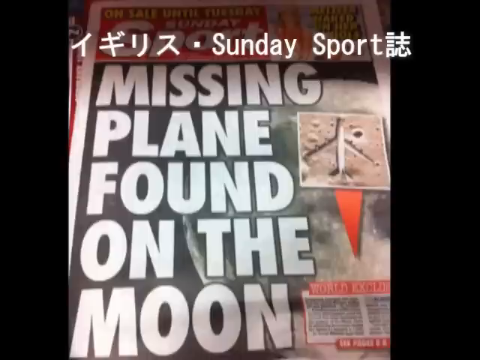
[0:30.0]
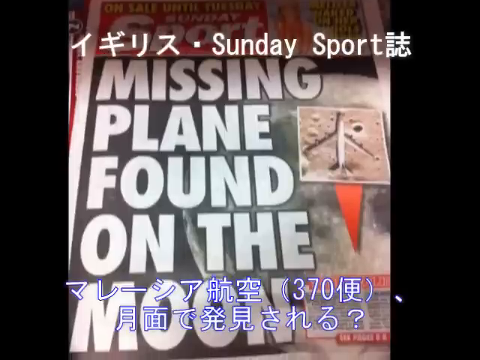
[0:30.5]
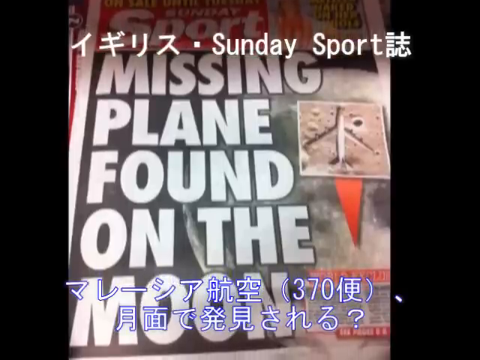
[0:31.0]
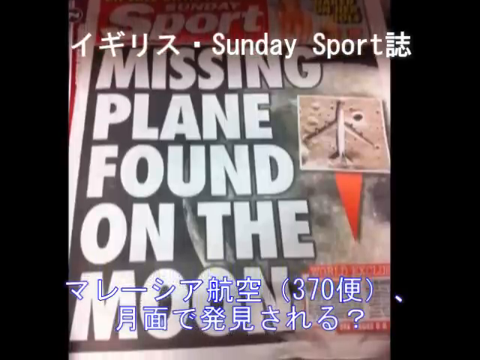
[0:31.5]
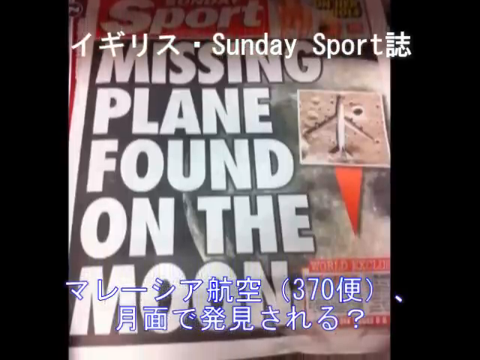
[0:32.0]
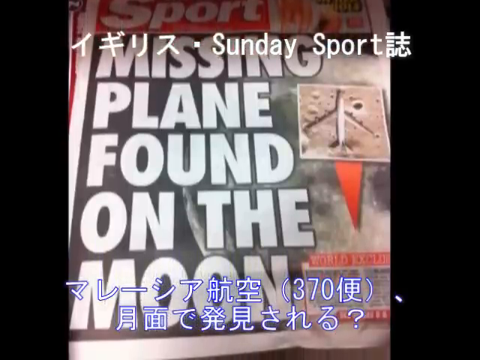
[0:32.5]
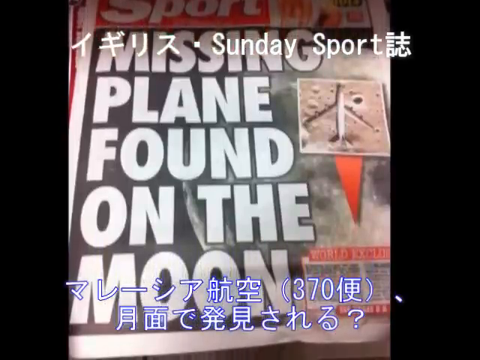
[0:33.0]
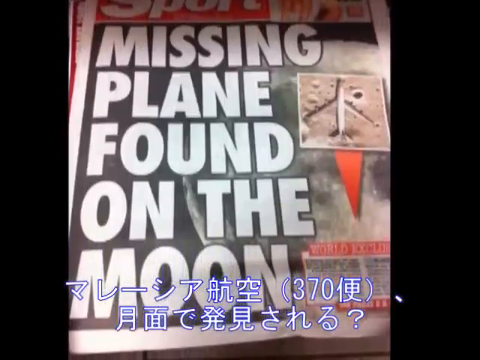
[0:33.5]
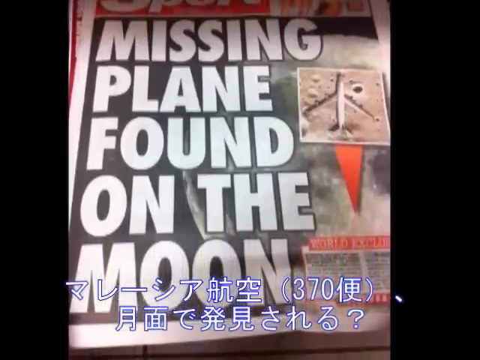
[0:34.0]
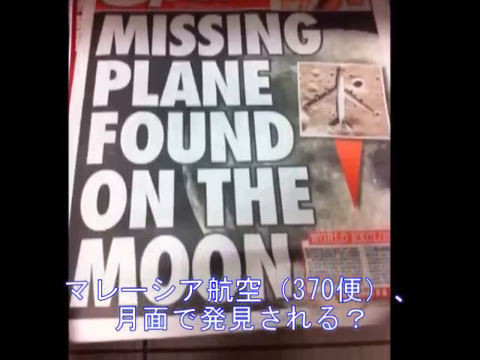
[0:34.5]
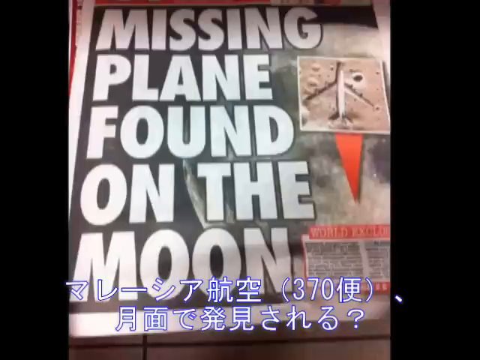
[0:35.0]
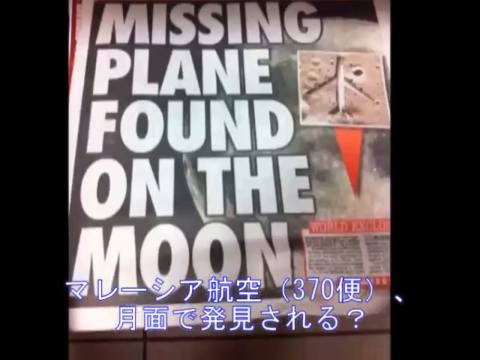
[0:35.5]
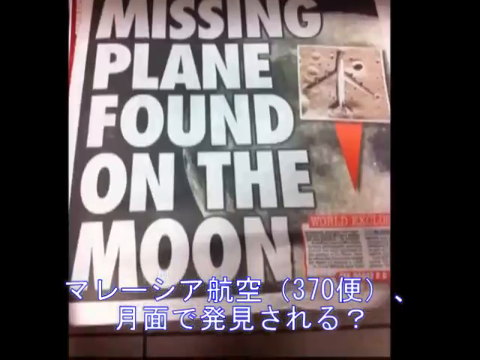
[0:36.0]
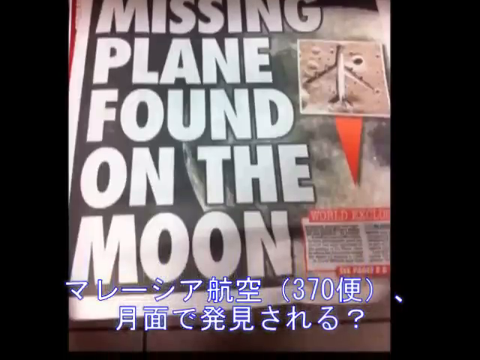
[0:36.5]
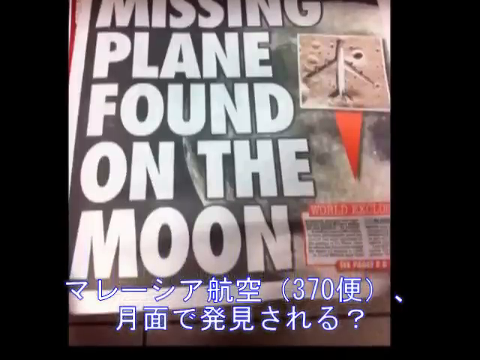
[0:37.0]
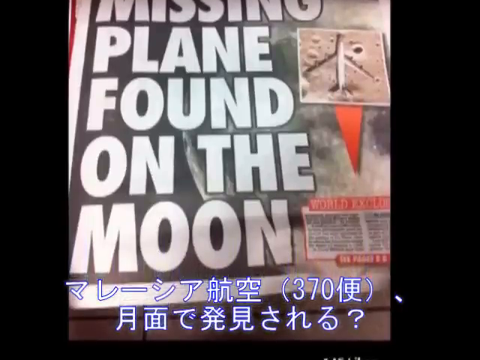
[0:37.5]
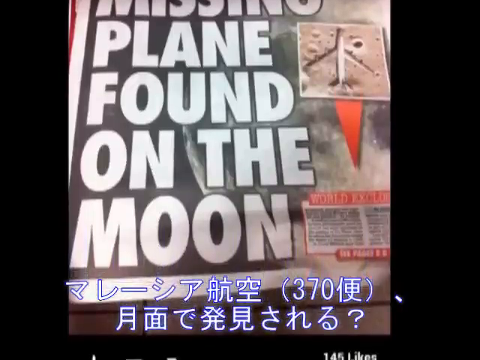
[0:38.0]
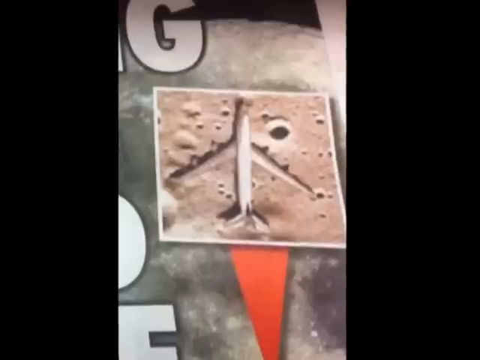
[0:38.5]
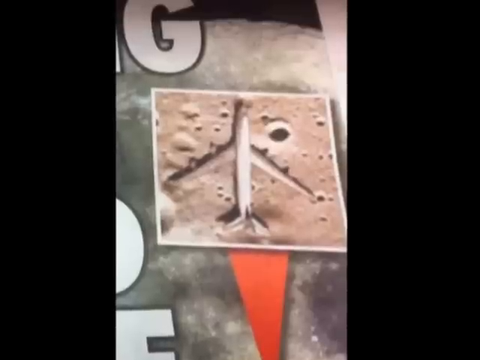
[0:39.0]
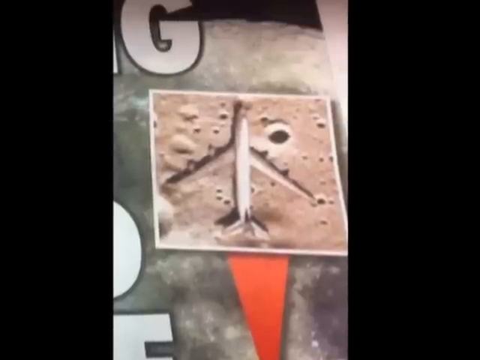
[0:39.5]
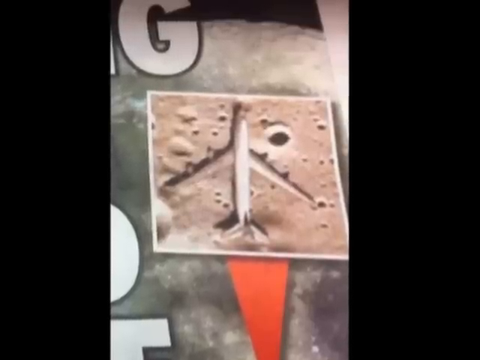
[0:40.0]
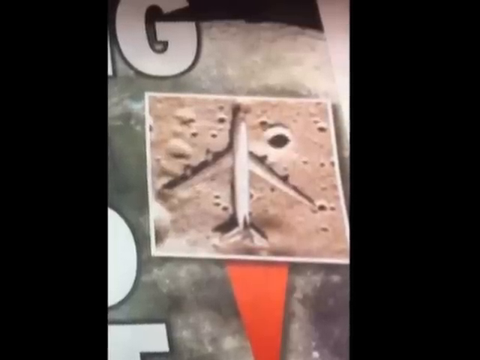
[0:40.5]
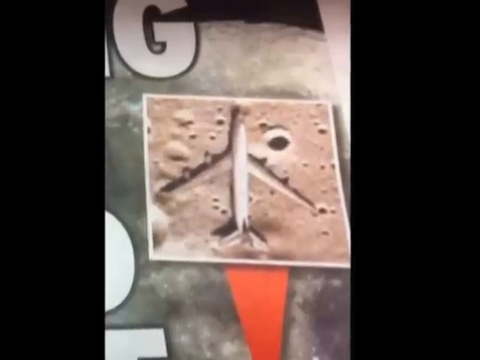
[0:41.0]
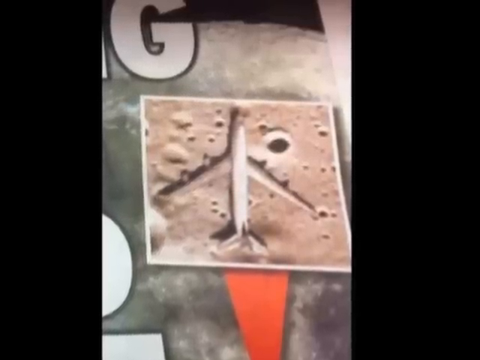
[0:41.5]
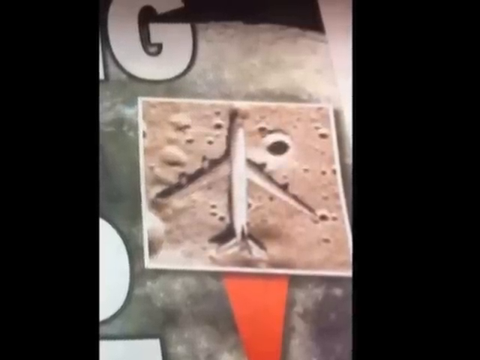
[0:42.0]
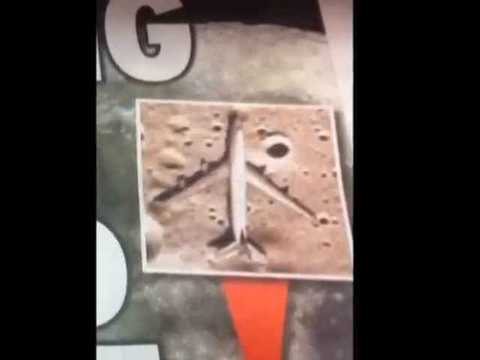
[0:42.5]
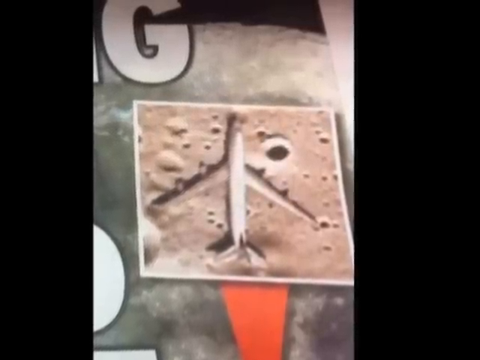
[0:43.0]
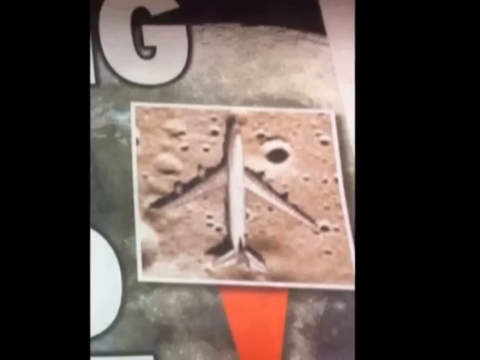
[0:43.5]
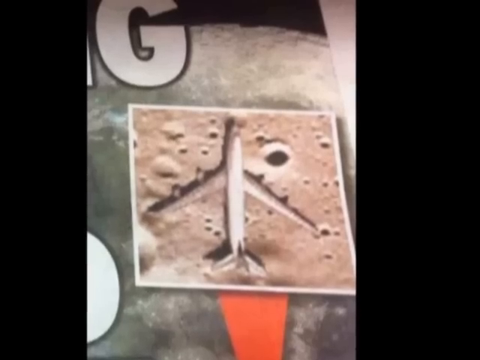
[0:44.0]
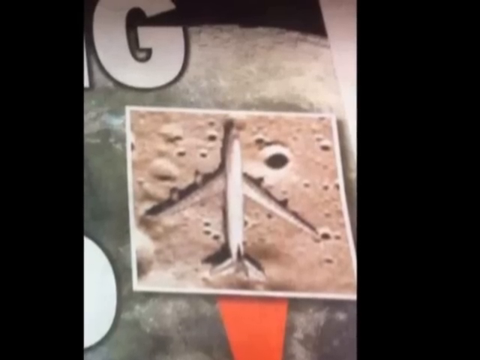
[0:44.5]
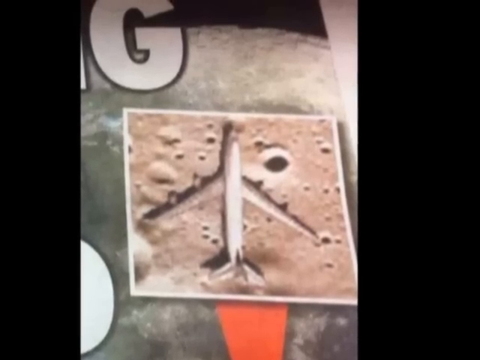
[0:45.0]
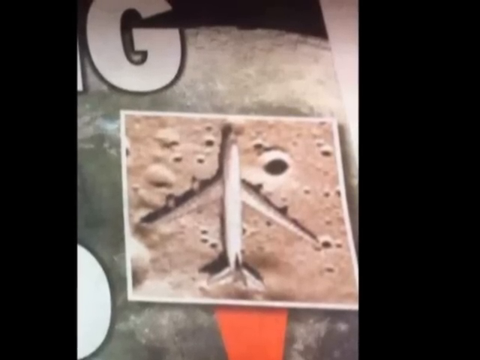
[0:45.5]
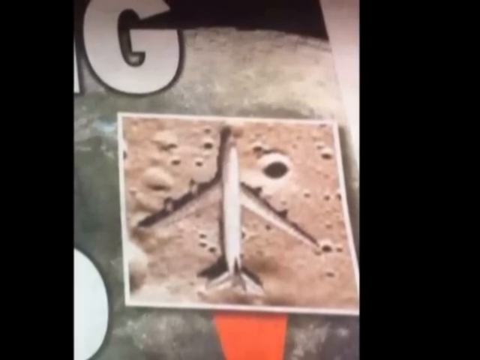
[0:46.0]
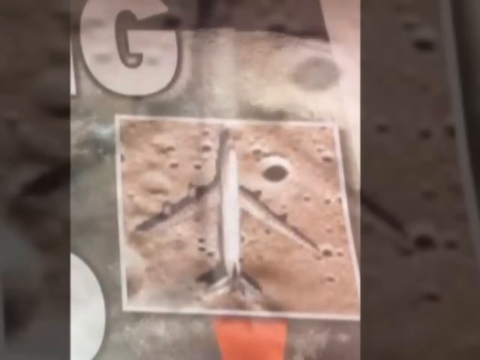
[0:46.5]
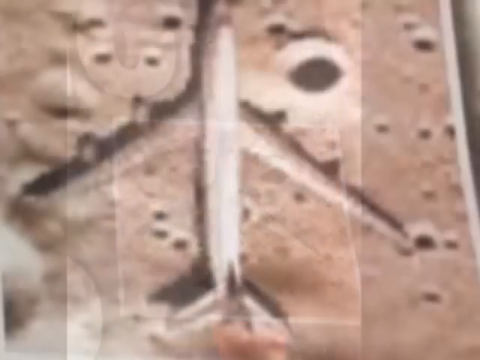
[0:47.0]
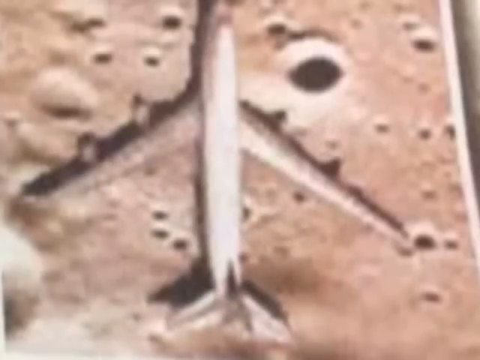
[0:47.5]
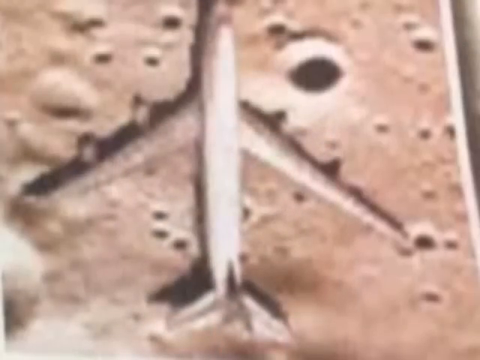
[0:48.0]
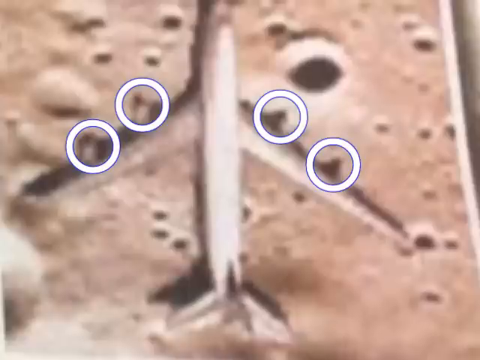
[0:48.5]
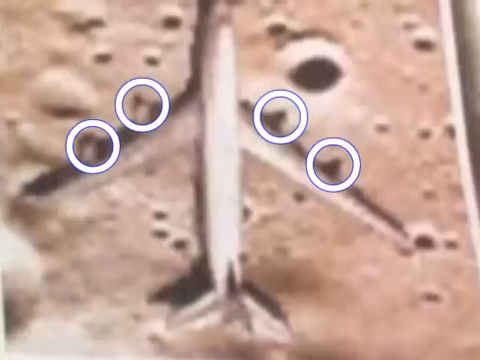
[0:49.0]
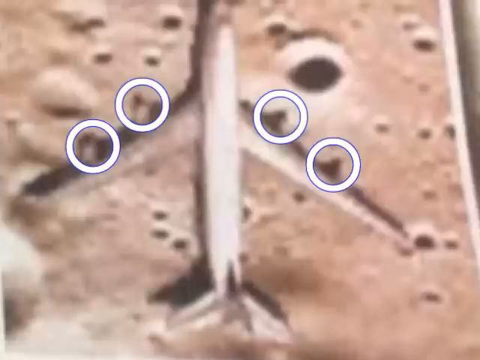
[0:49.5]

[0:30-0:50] A closer image of the magazine shows "Sunday sport" and "Missing plane found on the moon." The view moves upward, revealing a small image of what looks like a plane stranded on an arid planet, apparently meant to be the moon. The image becomes more close up and focused, showing what looks like the moon with a plane landed on top of it, and a couple of jet engines are pointed out. The headline is in white text reading "missing plane found on the moon," and there is some text in Japanese. The name of the paper, "Sunday sports," is at the top, along with "on sale this Thursday." One or two other stories are visible, and text reads "world exclusive missing plane found on the moon."